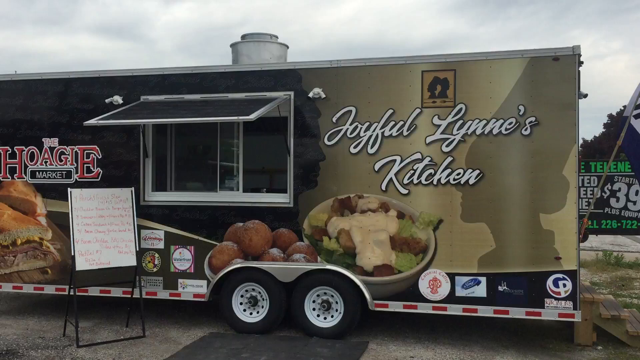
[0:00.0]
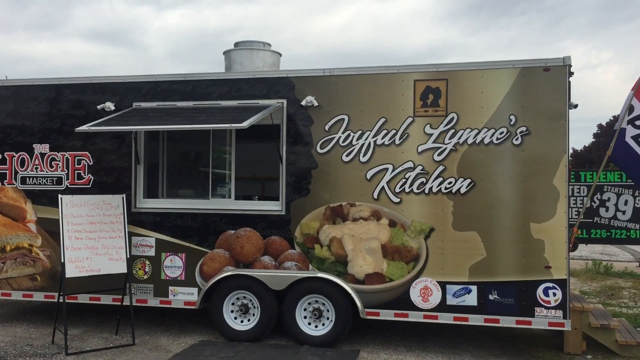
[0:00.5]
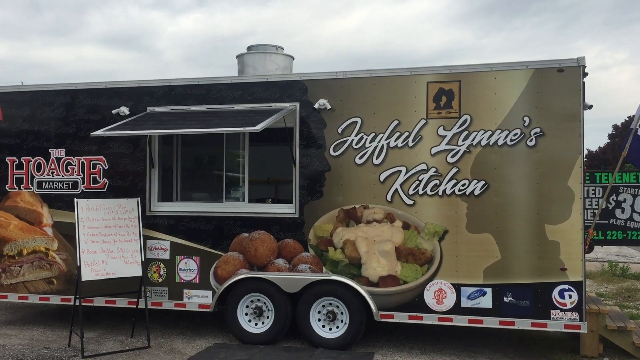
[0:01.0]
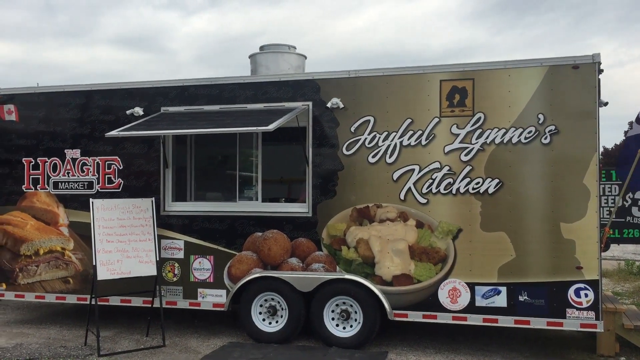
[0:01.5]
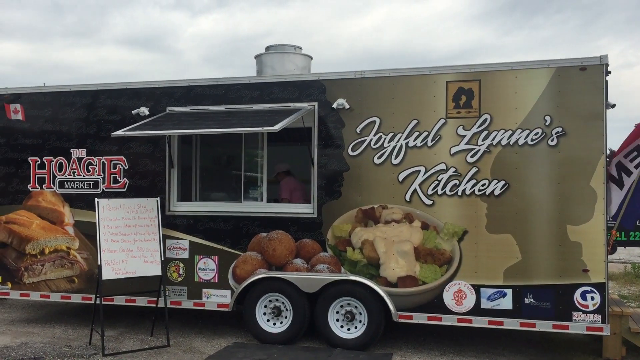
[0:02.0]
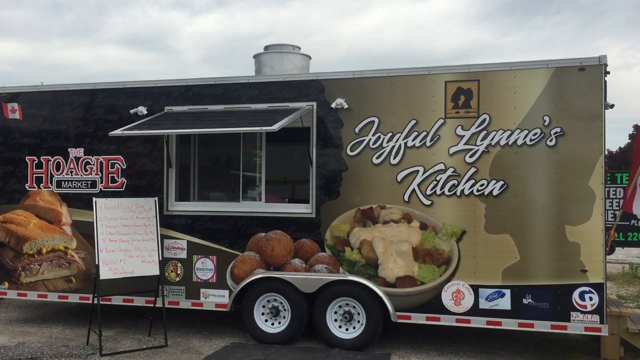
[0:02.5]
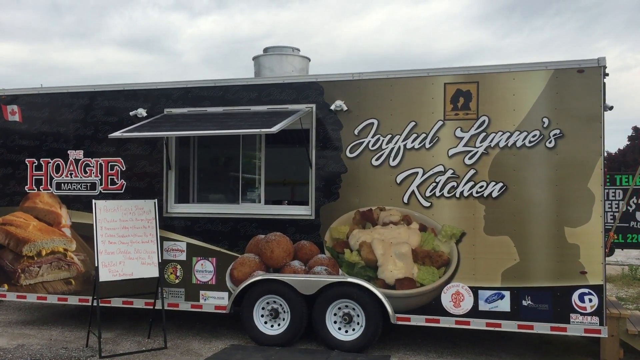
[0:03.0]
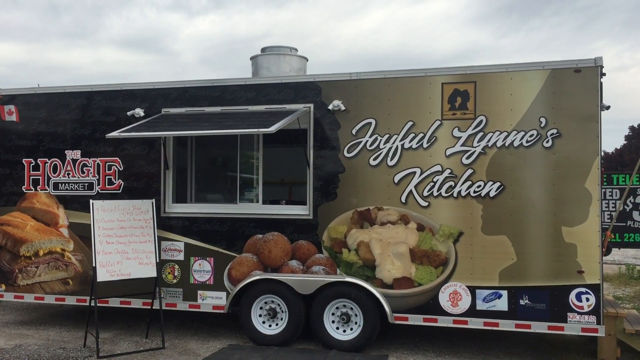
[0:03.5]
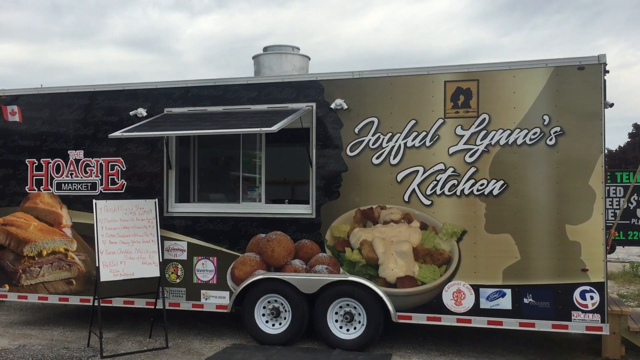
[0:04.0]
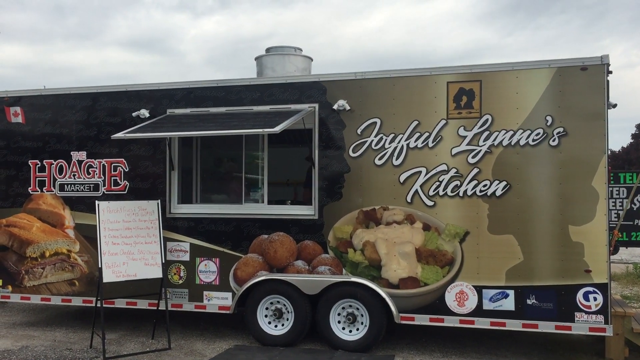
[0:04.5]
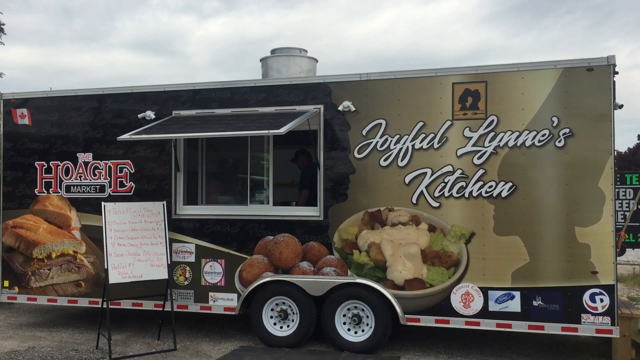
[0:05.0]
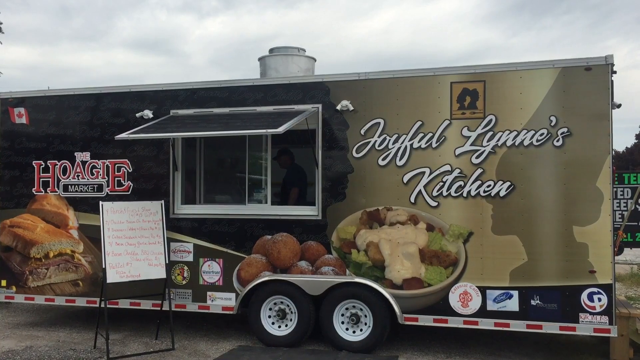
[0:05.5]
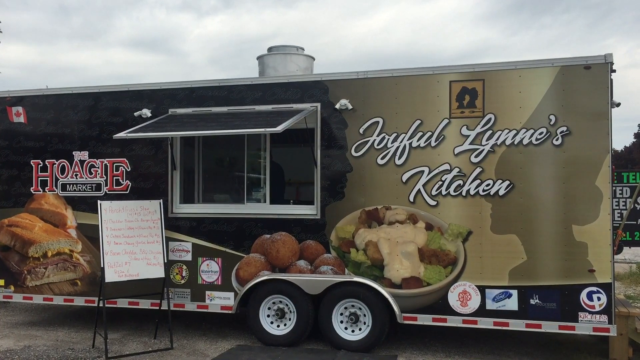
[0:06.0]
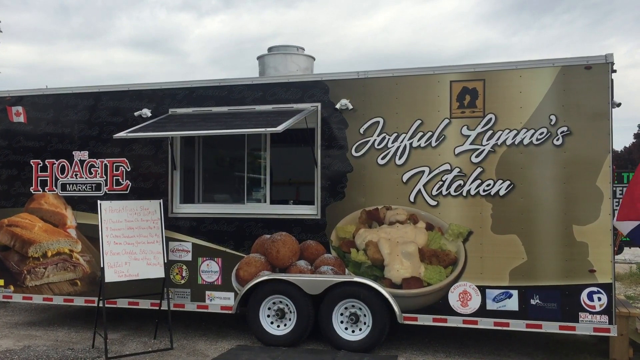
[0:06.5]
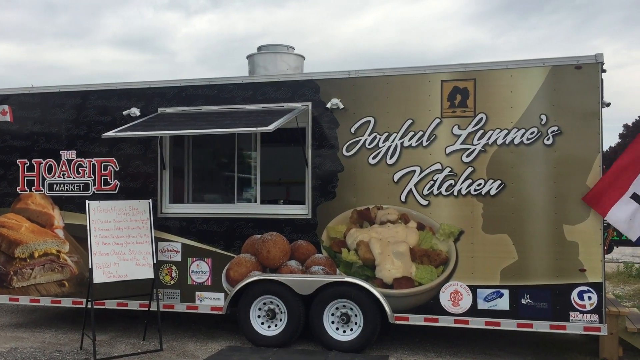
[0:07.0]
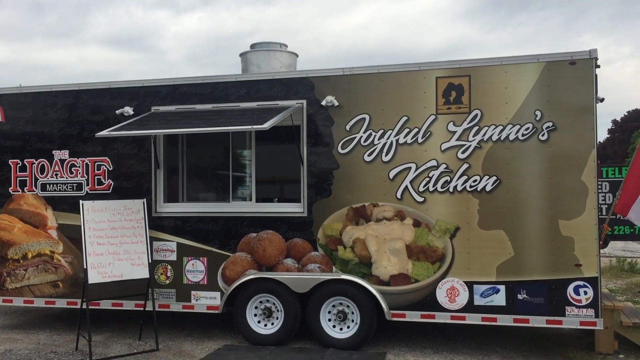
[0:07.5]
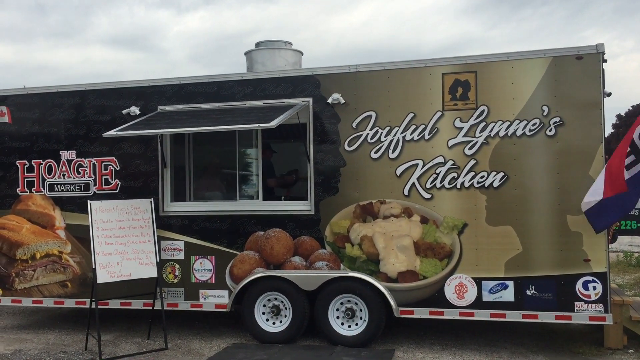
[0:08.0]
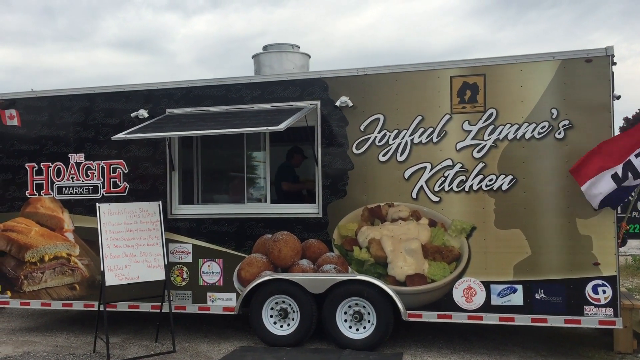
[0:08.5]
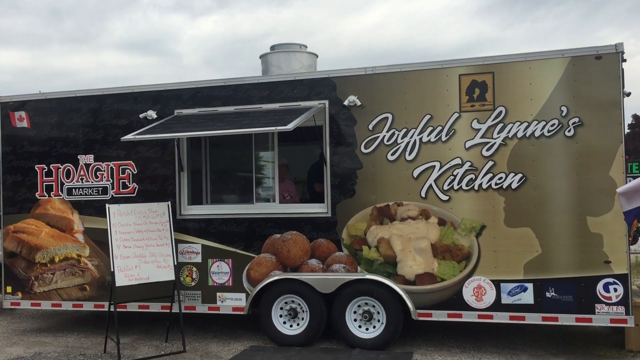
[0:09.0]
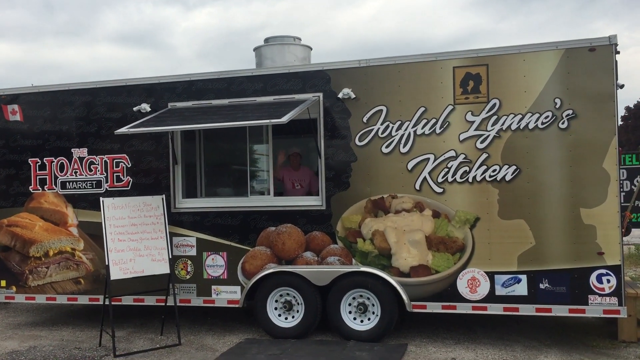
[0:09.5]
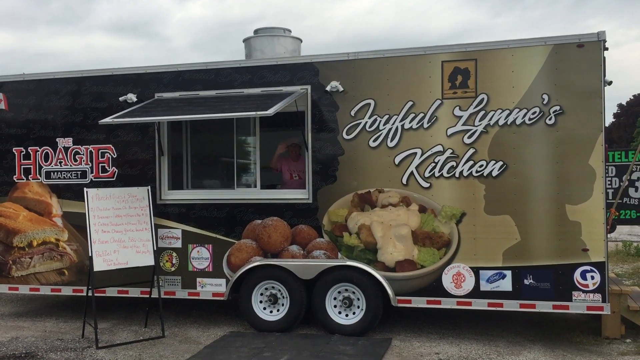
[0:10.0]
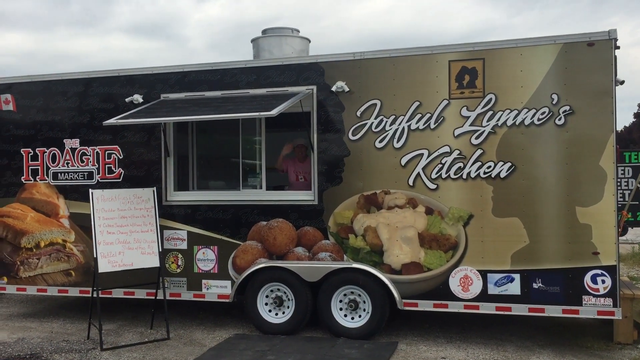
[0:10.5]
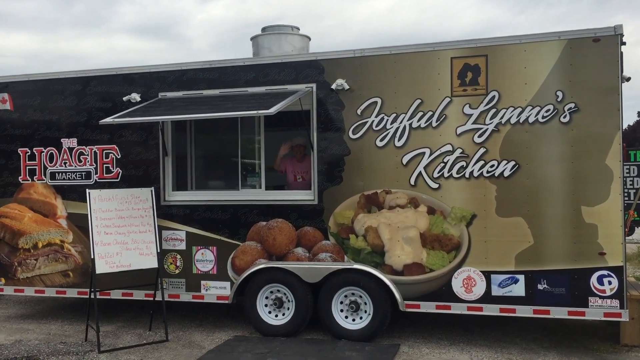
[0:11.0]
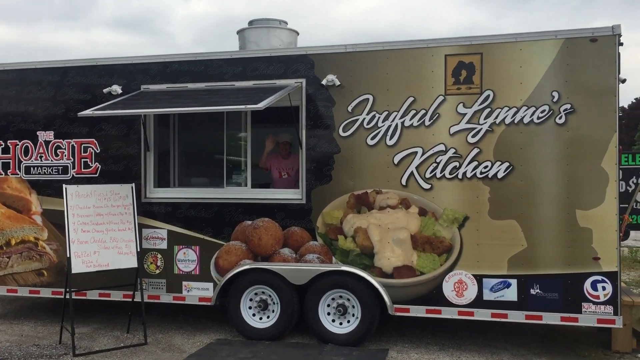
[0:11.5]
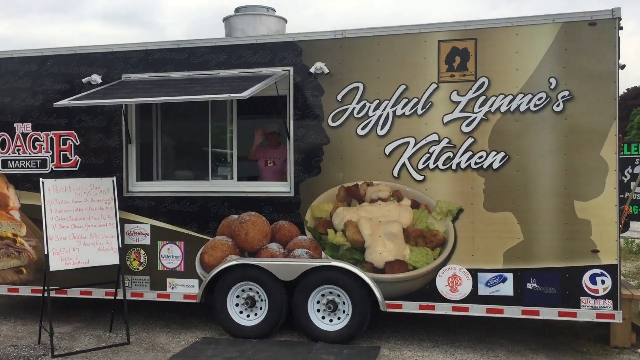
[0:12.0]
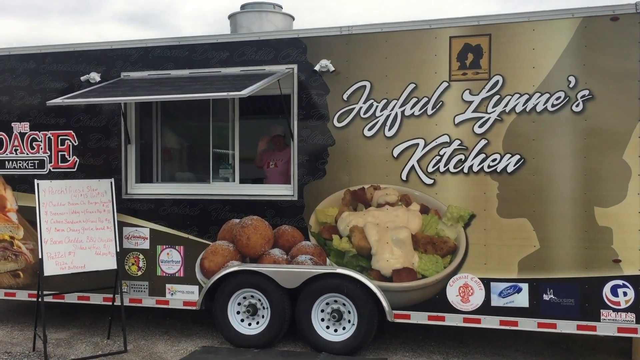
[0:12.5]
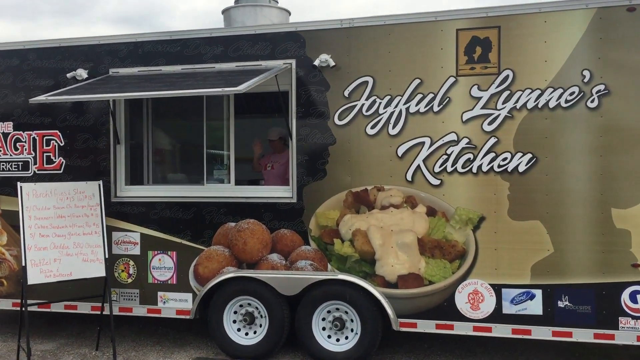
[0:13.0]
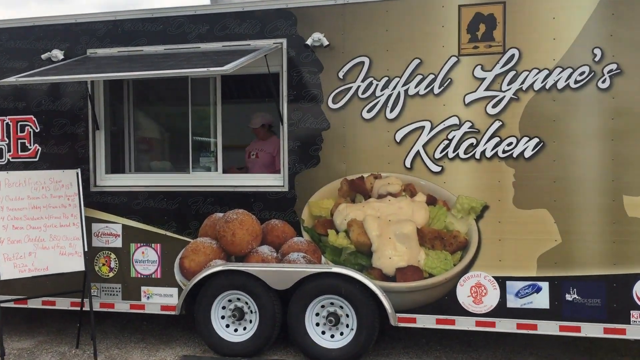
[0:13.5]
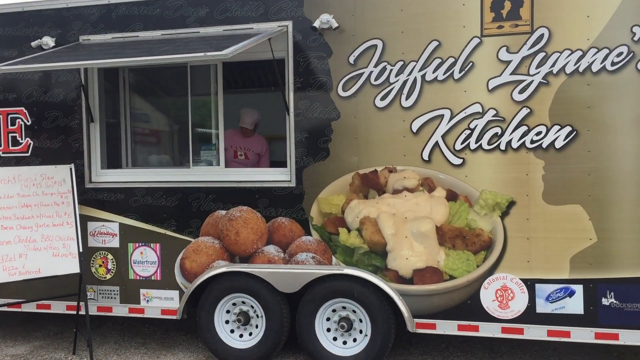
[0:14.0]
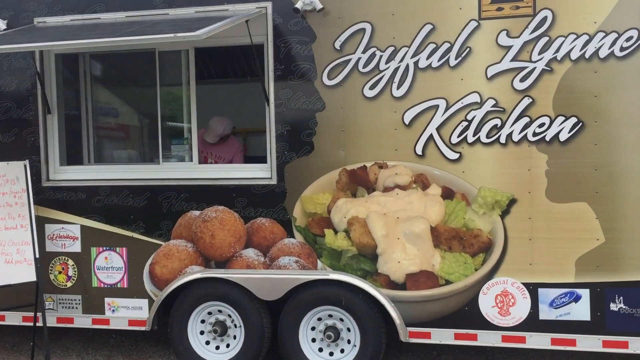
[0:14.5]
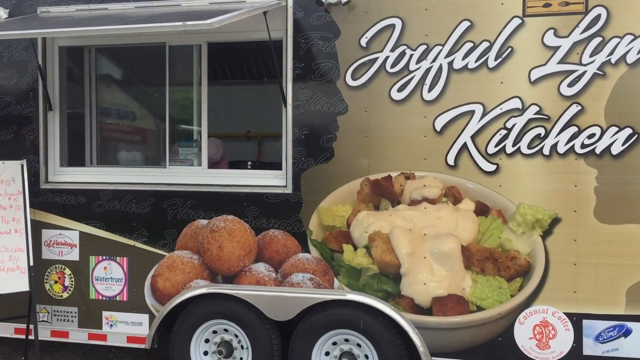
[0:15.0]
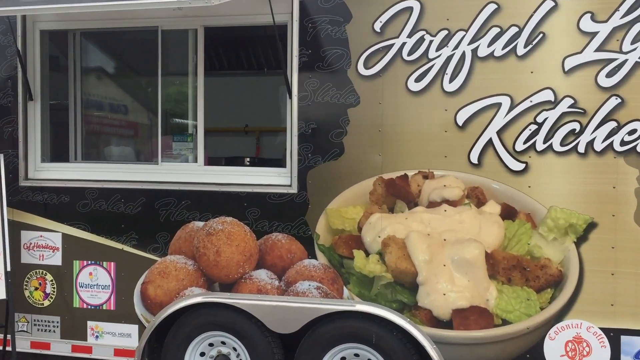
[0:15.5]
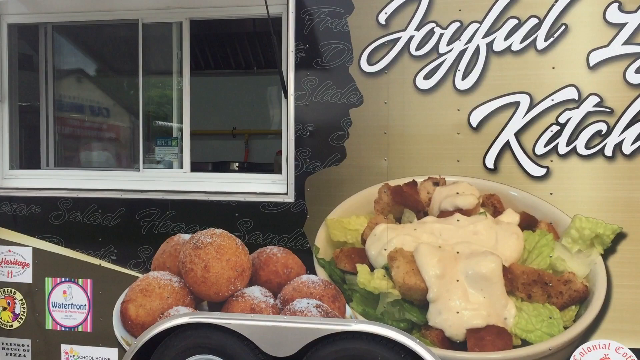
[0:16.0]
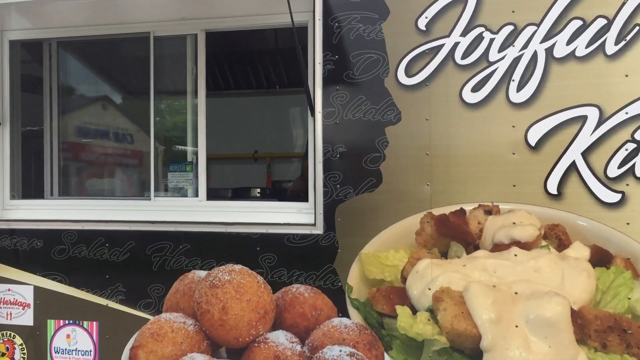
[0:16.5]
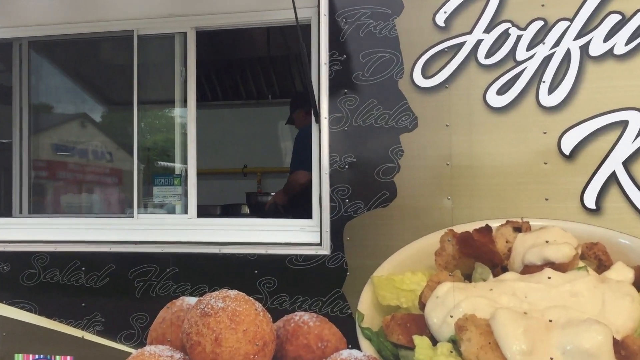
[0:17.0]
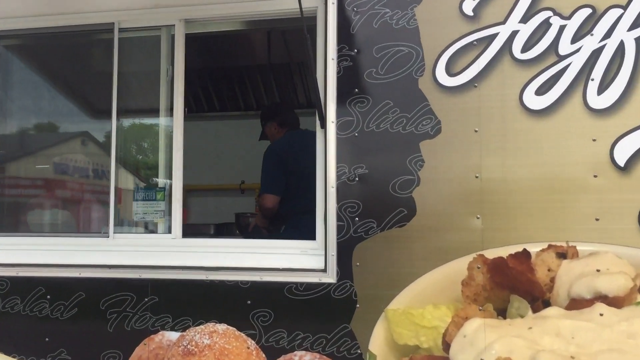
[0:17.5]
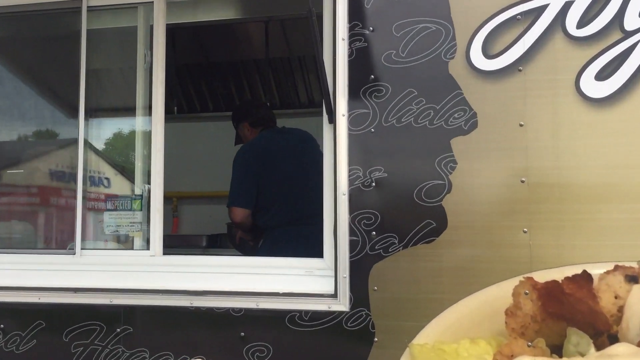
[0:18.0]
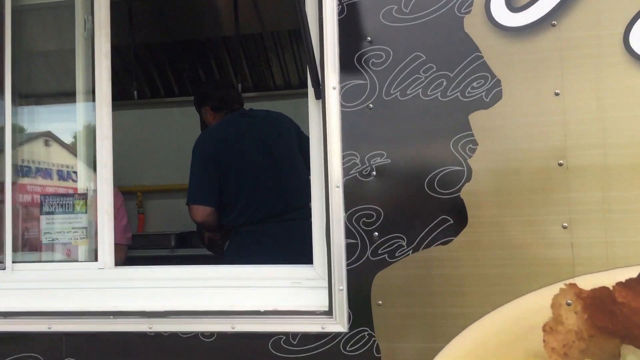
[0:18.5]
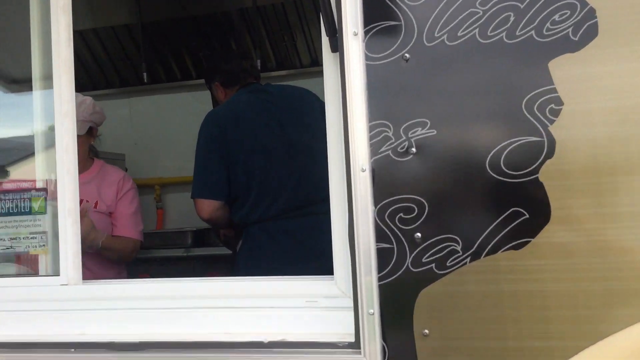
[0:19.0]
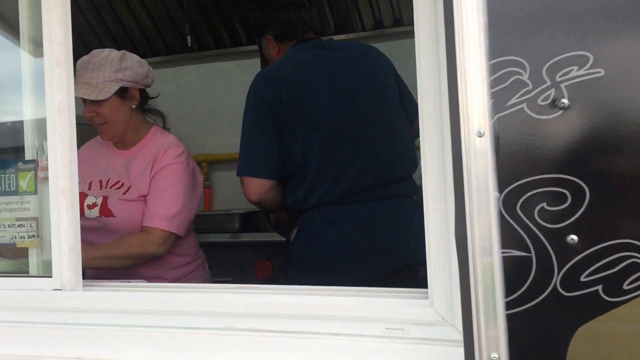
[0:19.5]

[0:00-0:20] A van that looks like a kitchen has "Joyful Lynn's Kitchen" written on it in white. Food is pictured on the outside and looks like fast food: a white bowl of salad with some sauce on it, and something that looks like sandwiches. The van has a big window, apparently where customers are served. Inside are two people: a white woman wearing a pink t-shirt and a cap, and a man wearing a navy blue t-shirt and a black cap. Both look very busy. Inside the van there is also a picture or paper that appears to list the prices. The van is on a street that is not busy and is very clean. The camera is very shaky, but what is happening is still visible.